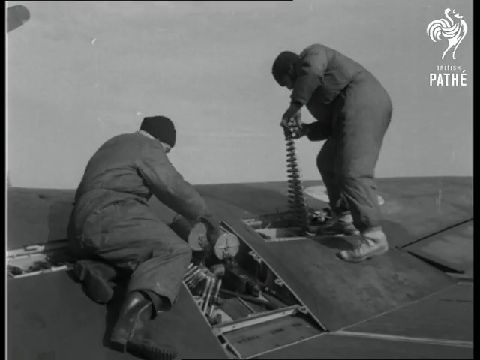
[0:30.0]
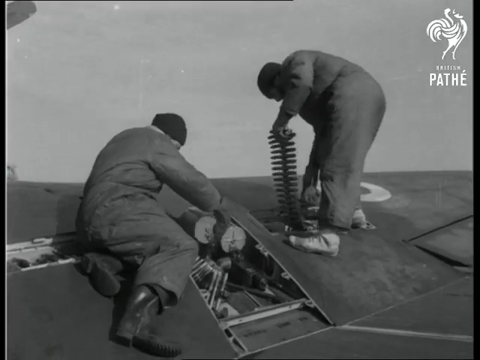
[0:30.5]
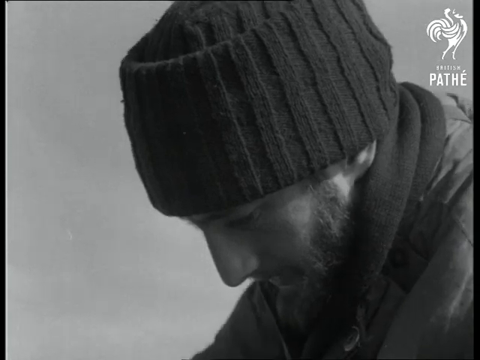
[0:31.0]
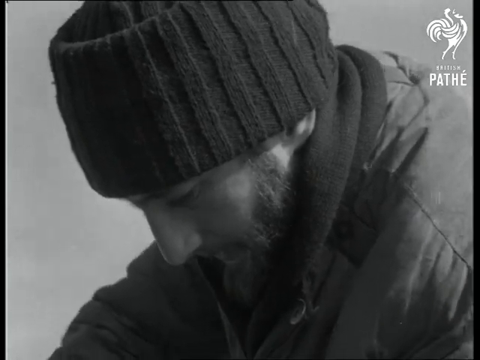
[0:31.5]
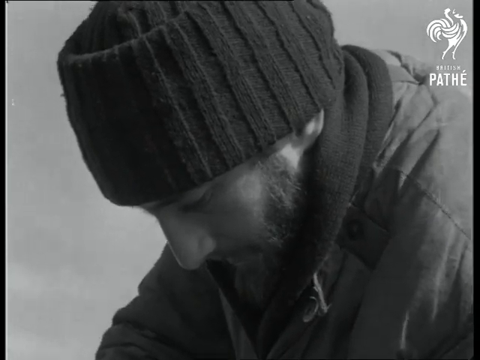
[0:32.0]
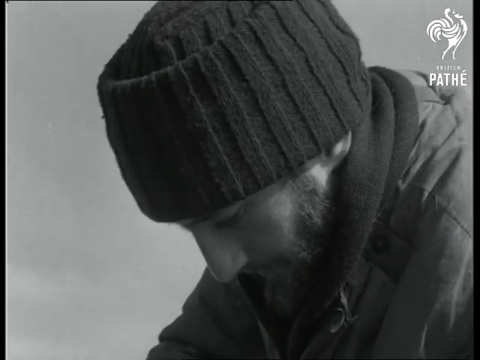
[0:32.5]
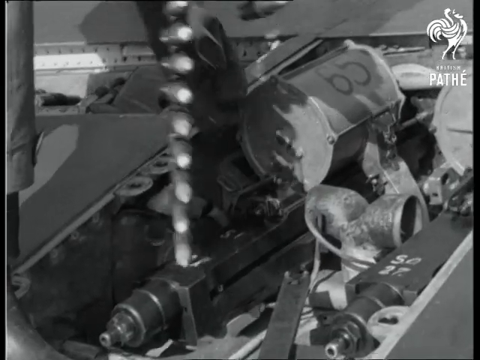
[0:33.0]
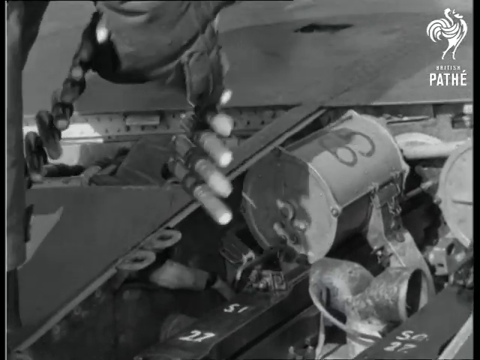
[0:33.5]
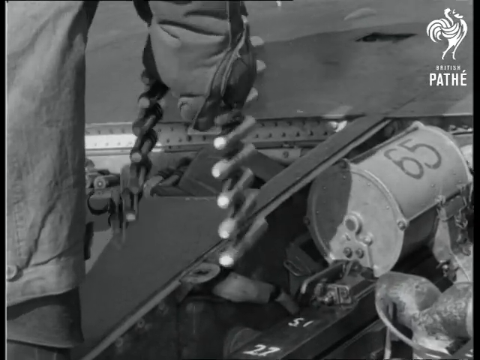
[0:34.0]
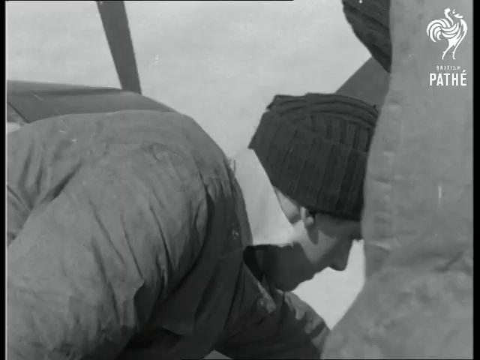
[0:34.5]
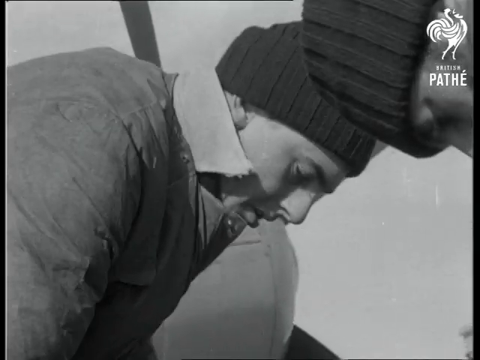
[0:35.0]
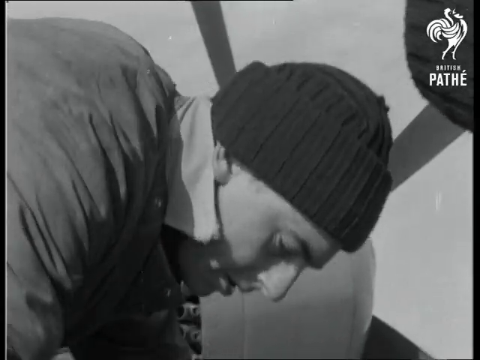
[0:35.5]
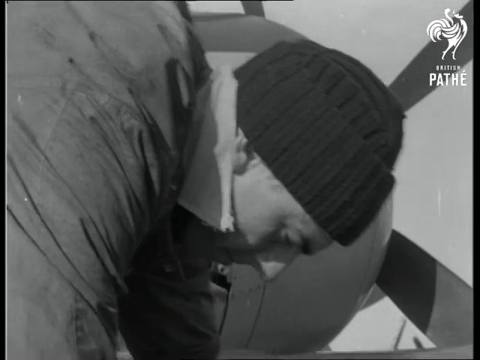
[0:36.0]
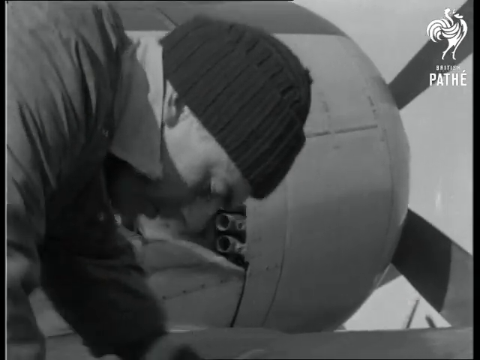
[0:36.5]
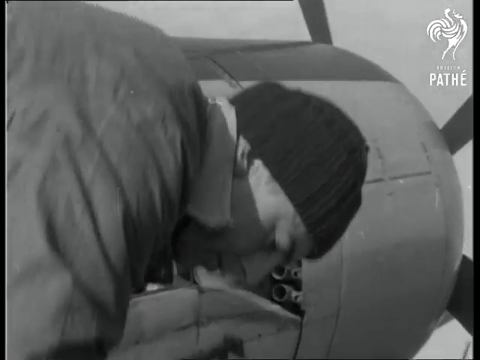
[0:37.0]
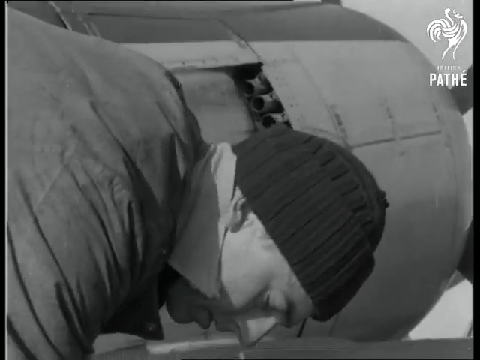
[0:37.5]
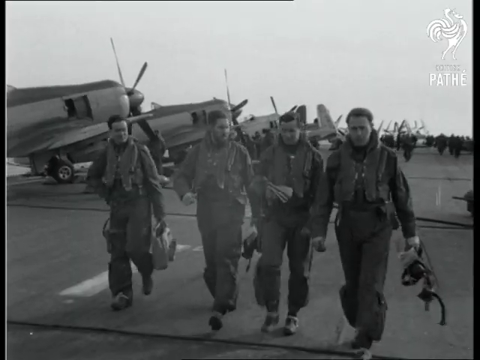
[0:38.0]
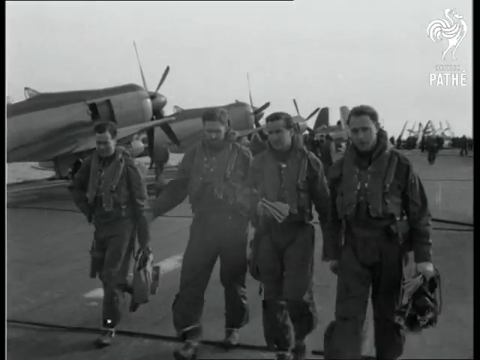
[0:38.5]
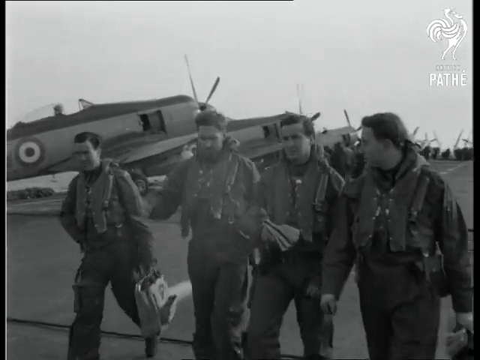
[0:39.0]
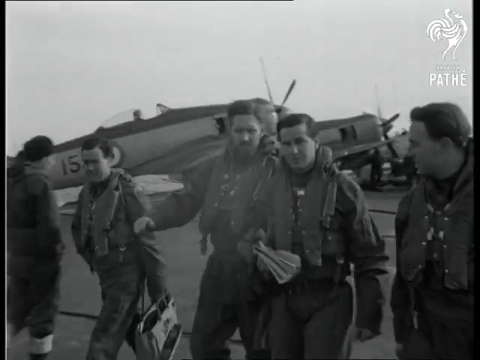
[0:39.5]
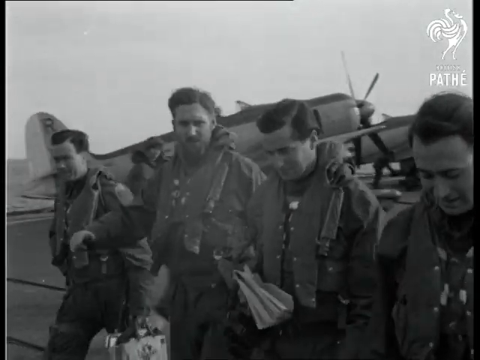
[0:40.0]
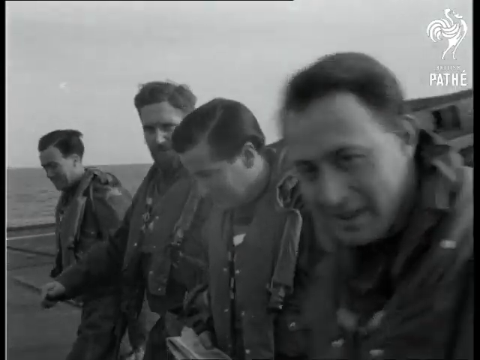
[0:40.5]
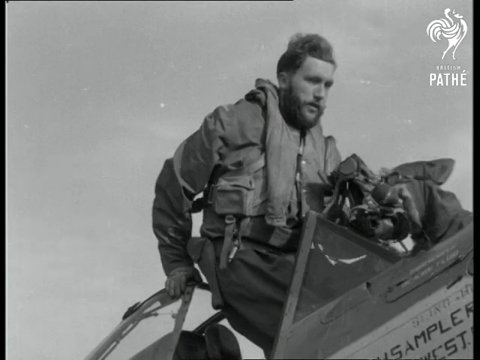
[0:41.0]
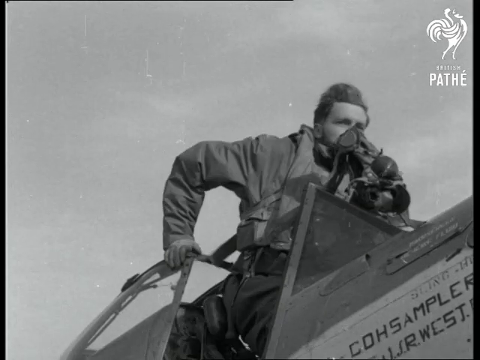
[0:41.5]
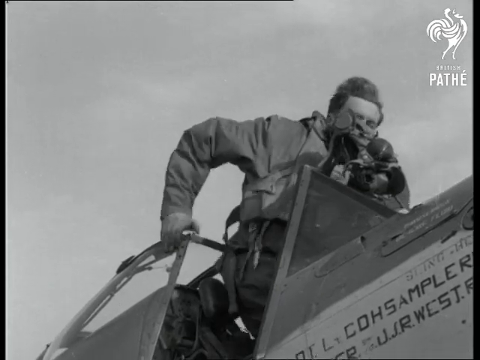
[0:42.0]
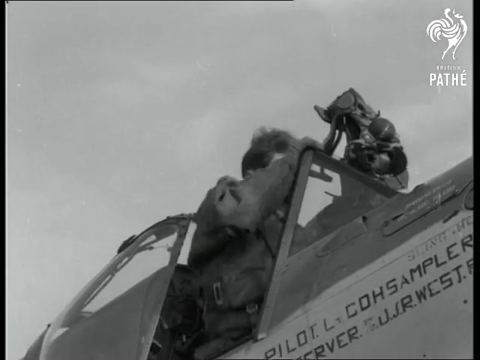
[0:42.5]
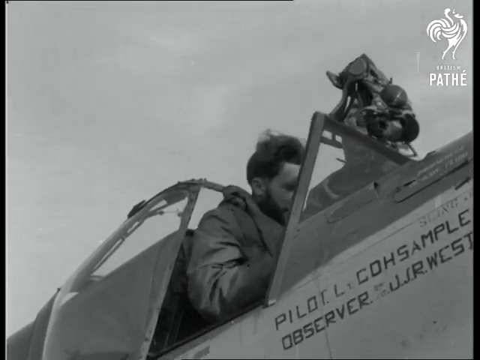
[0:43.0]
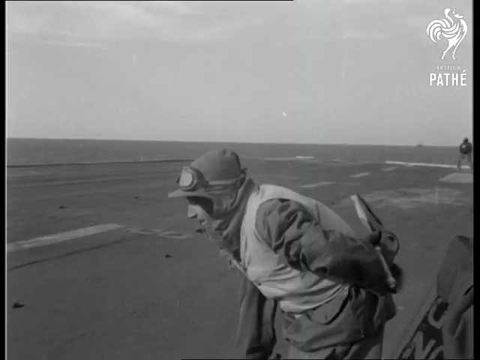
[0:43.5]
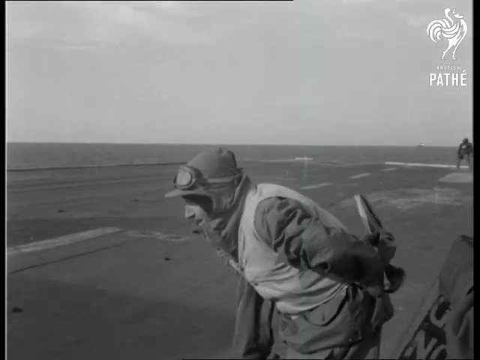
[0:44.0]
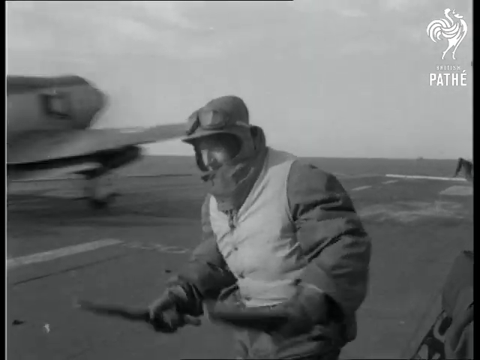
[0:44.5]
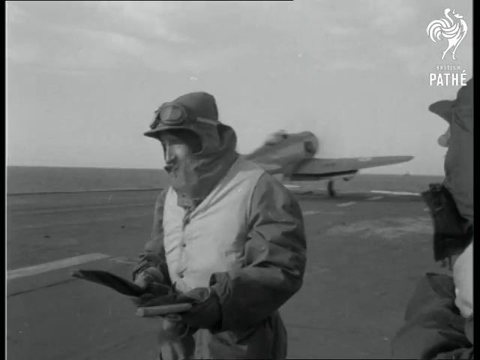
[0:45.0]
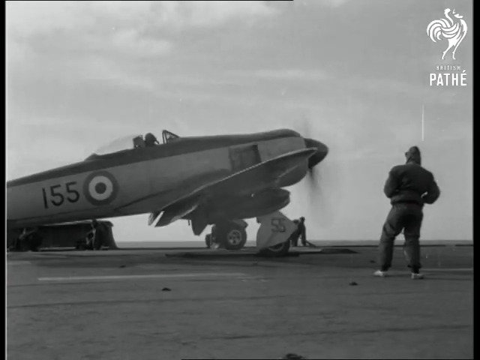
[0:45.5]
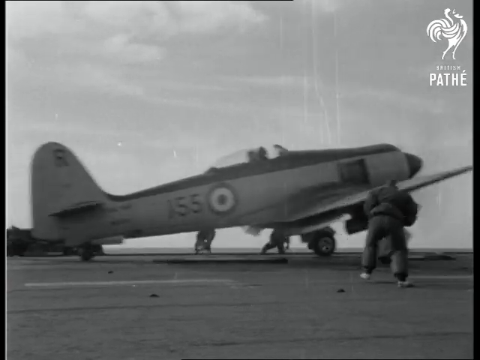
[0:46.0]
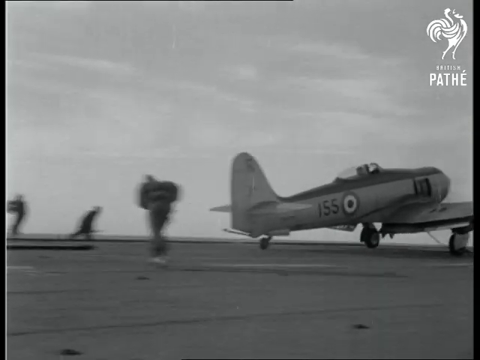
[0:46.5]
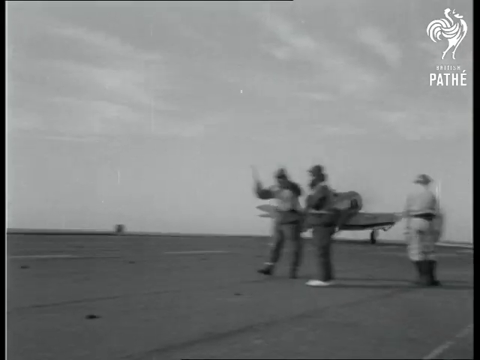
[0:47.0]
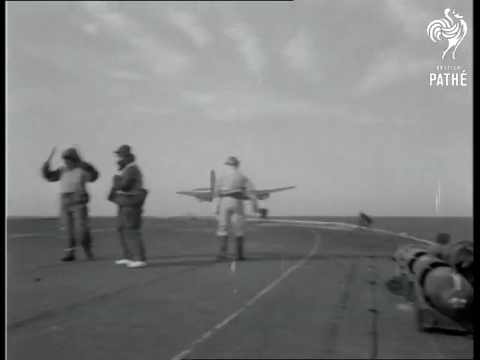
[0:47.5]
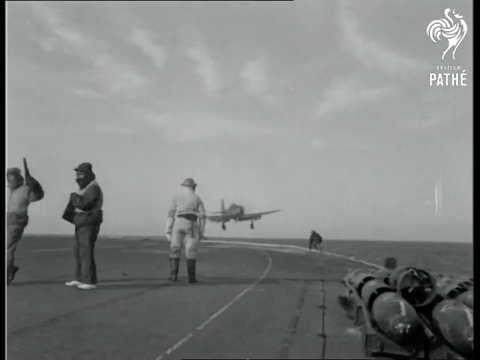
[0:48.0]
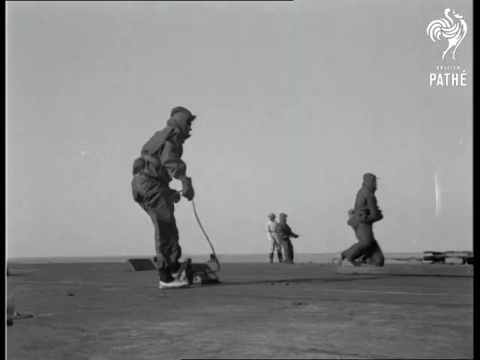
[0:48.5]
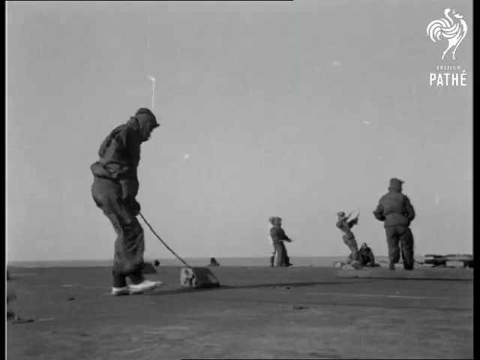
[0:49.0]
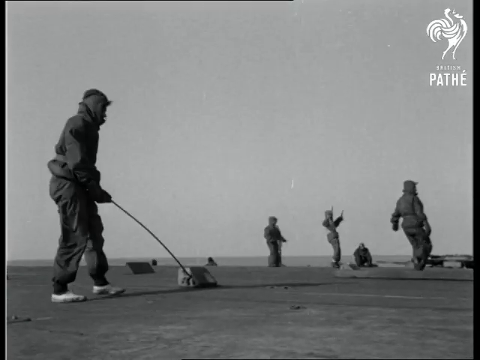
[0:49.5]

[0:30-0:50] Two men load a machine gun that seems to be attached to the wing of an airplane. One loads a belt of bullets into the wing while the other pulls on the hatch on the other side. The camera zooms in on one of the Air Force personnel, who wears a very large wool watch cap and a fur-lined bomber jacket and has not shaved in several days. The men continue loading what look like 50 caliber bullets into a carbine arm set into the wing, which carries the number 65. Another crewman, also in a large watch cap, is clean-shaven. Various sailors walk on the deck in front of the planes, which bear an insignia of alternating light and dark concentric circles.